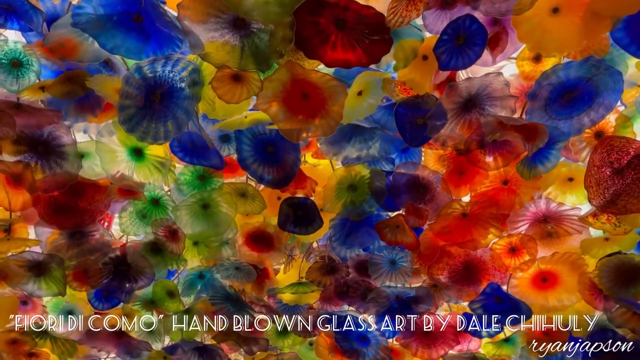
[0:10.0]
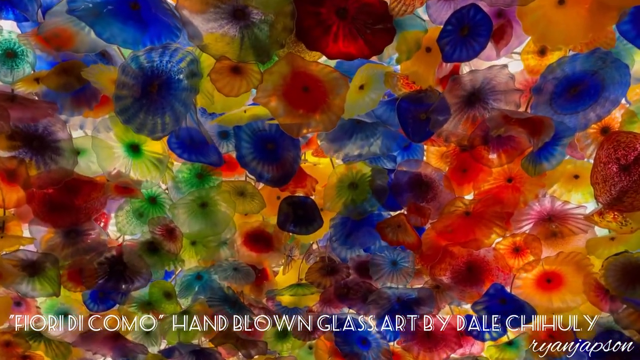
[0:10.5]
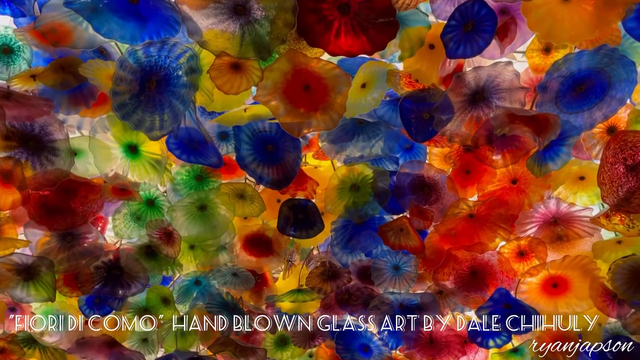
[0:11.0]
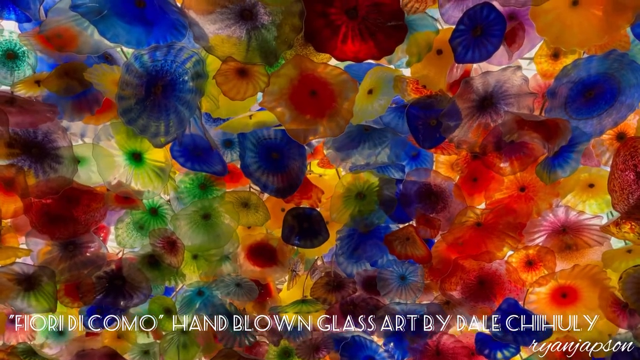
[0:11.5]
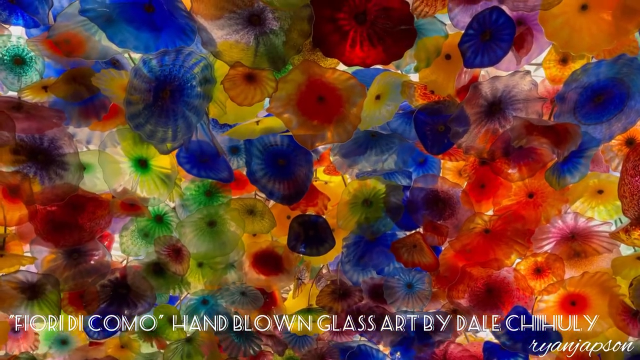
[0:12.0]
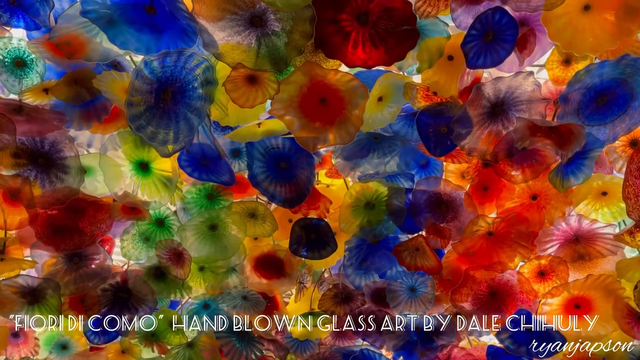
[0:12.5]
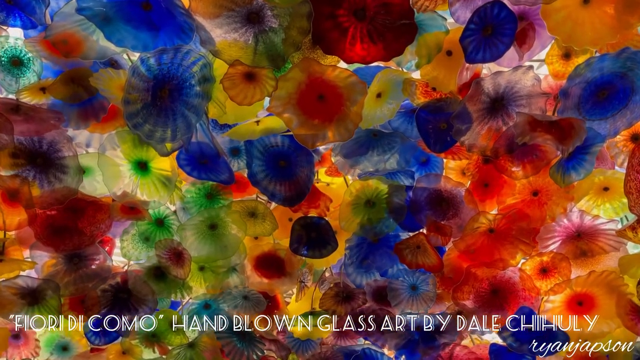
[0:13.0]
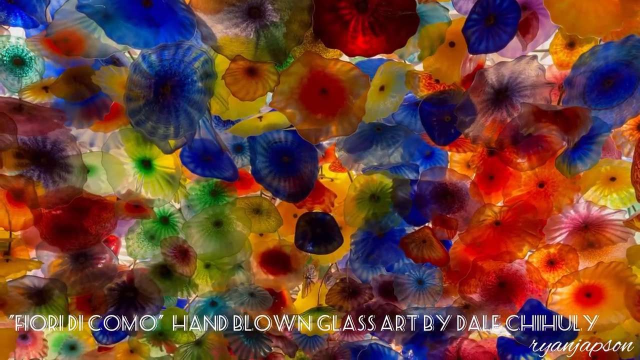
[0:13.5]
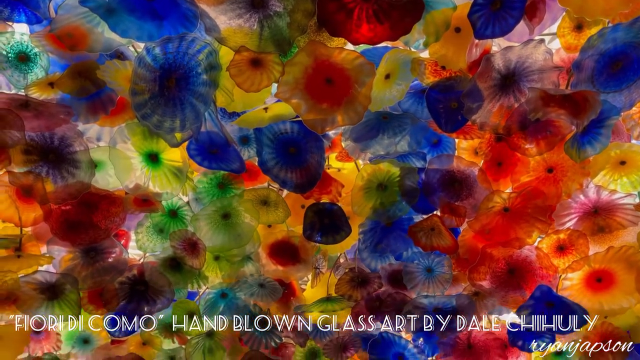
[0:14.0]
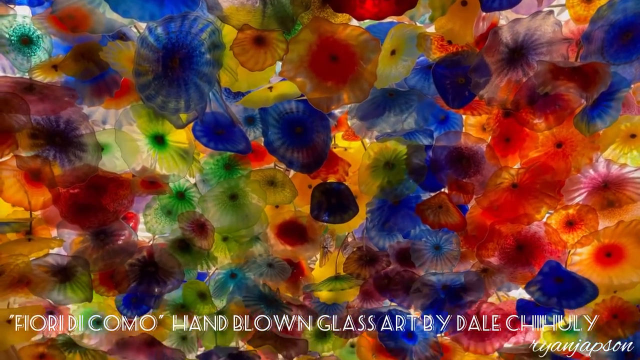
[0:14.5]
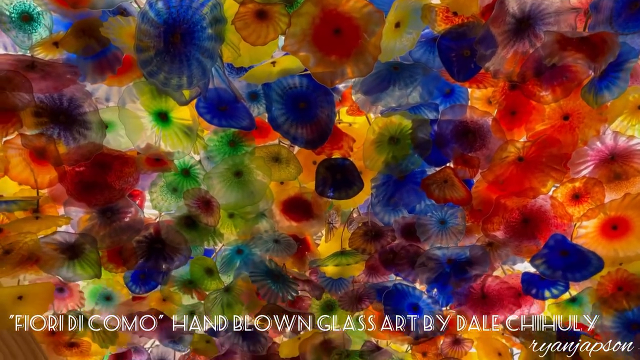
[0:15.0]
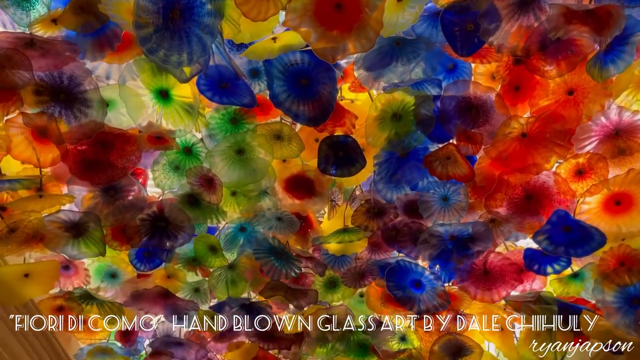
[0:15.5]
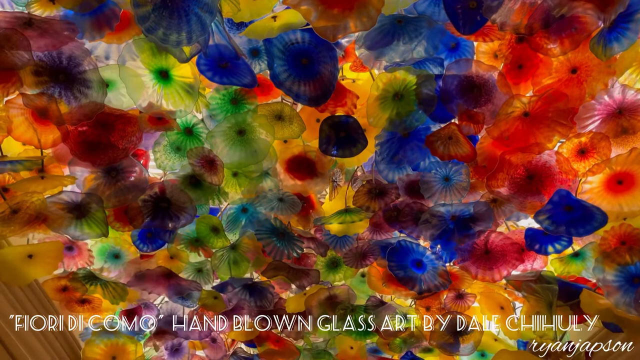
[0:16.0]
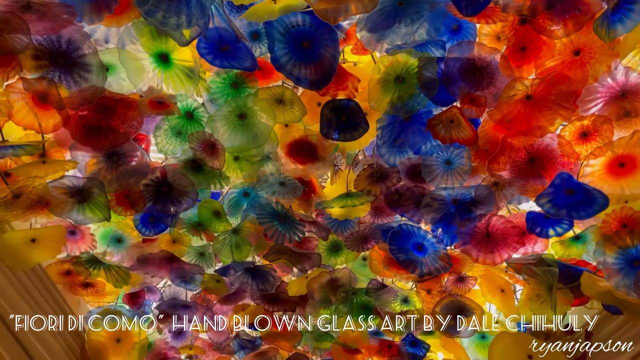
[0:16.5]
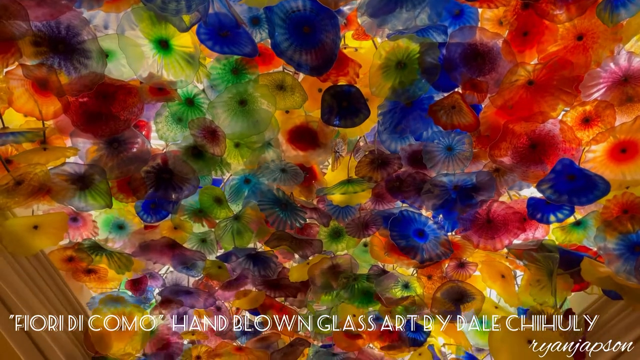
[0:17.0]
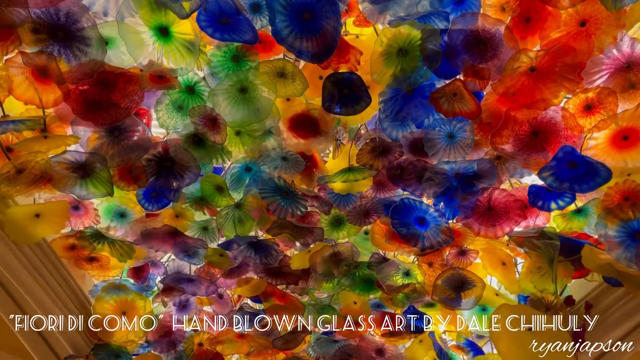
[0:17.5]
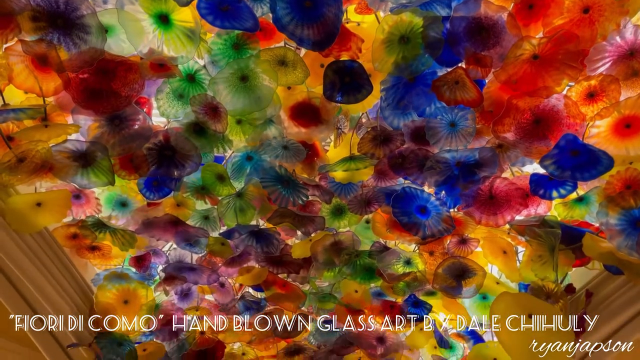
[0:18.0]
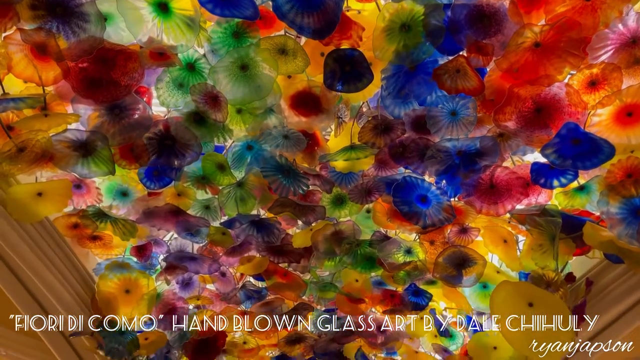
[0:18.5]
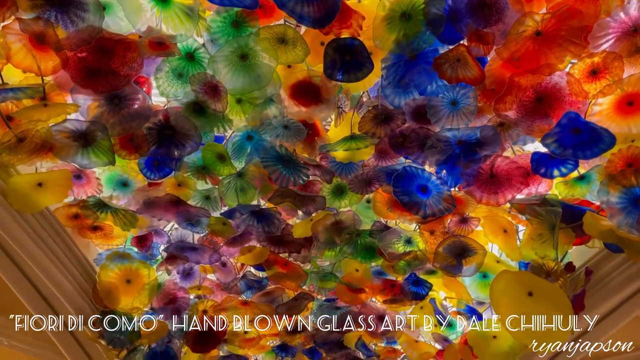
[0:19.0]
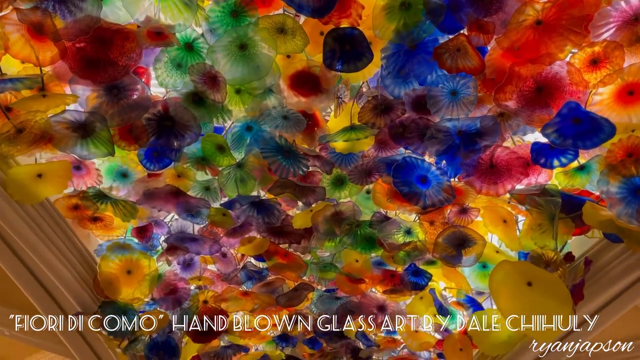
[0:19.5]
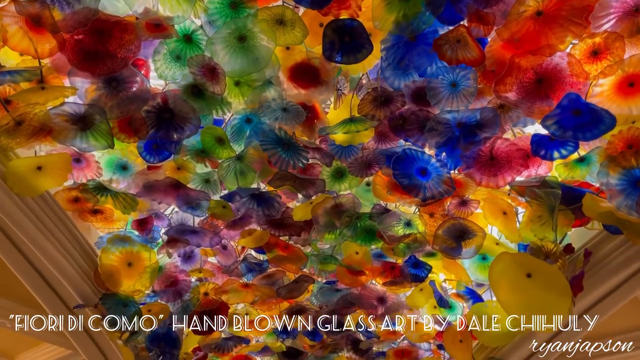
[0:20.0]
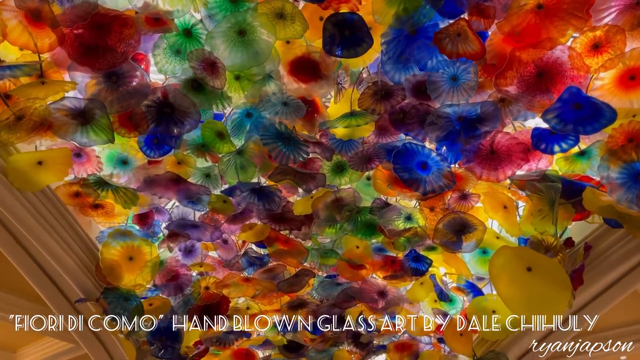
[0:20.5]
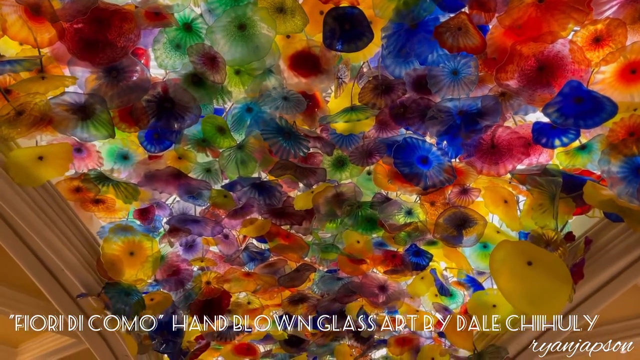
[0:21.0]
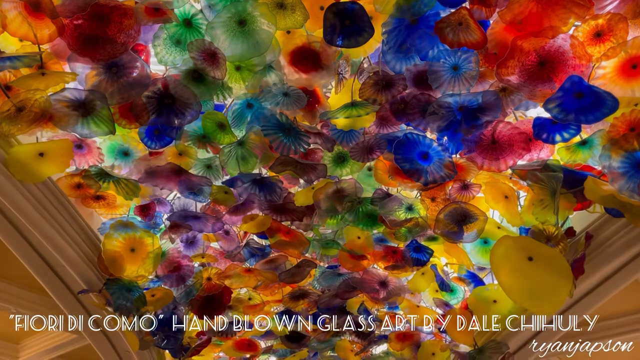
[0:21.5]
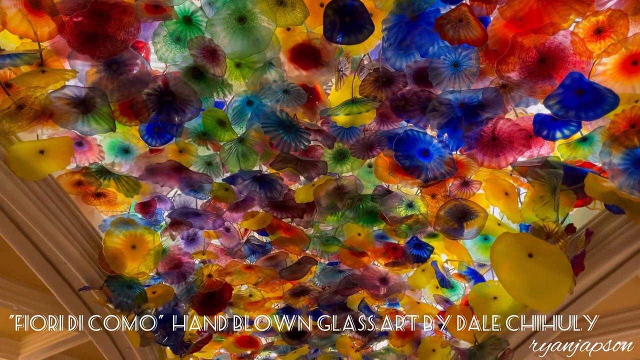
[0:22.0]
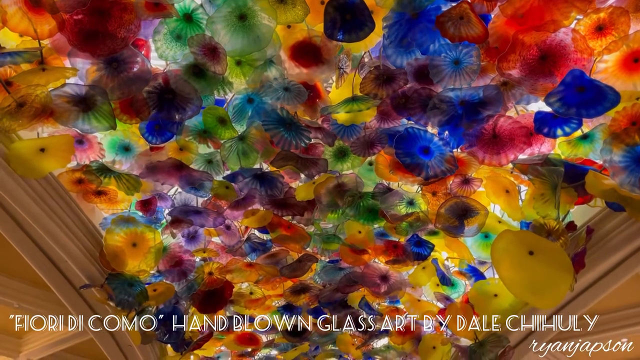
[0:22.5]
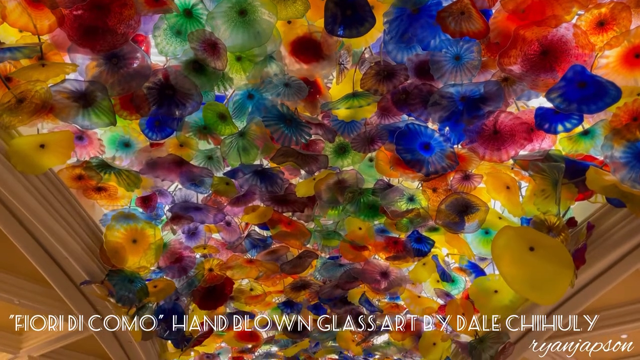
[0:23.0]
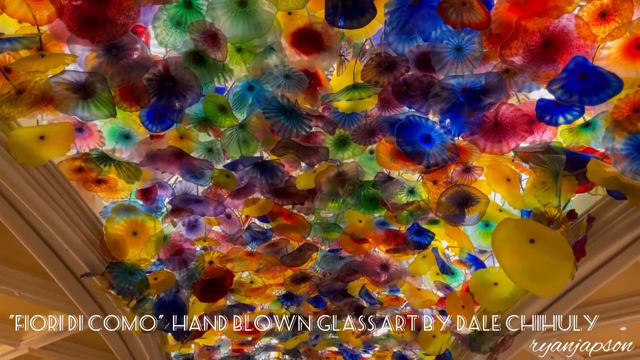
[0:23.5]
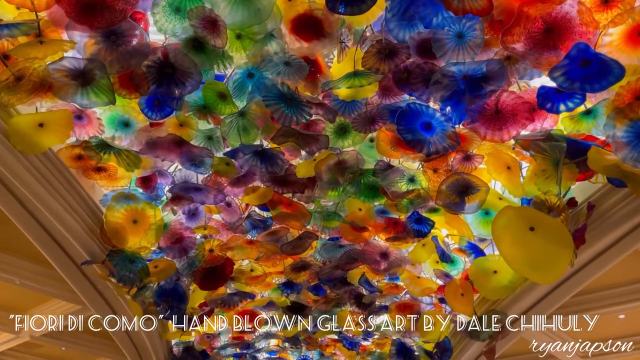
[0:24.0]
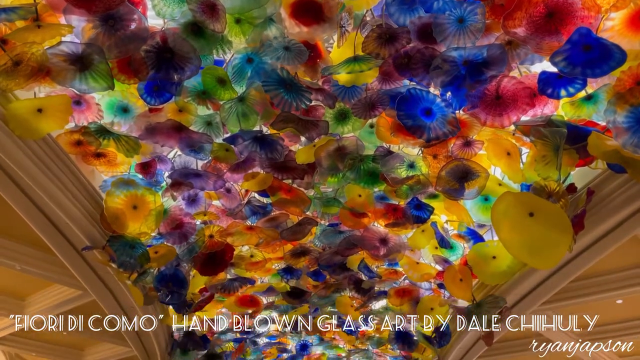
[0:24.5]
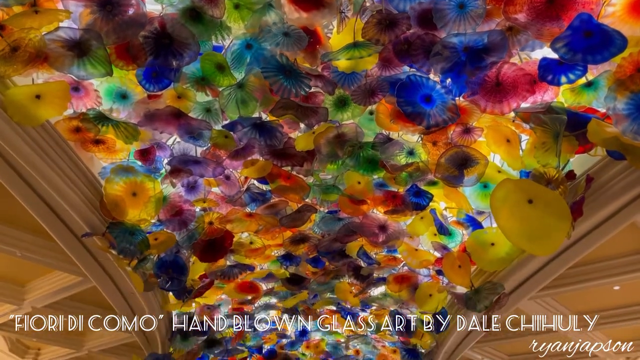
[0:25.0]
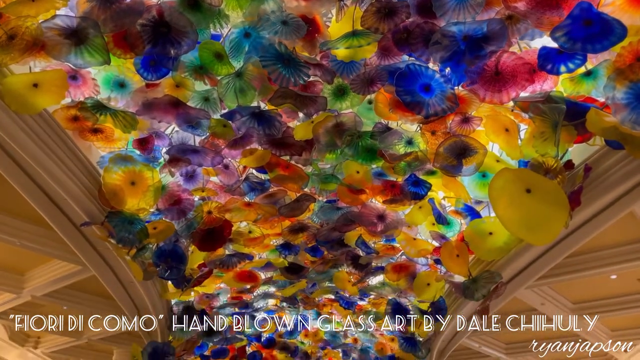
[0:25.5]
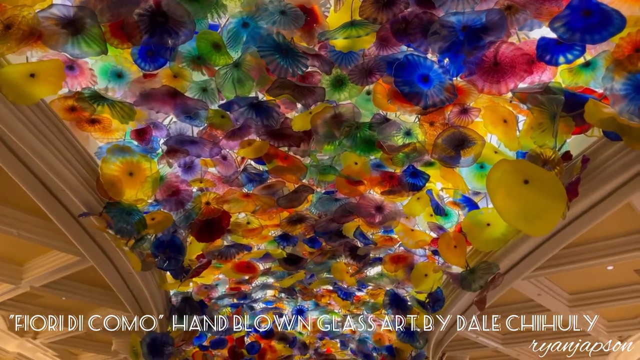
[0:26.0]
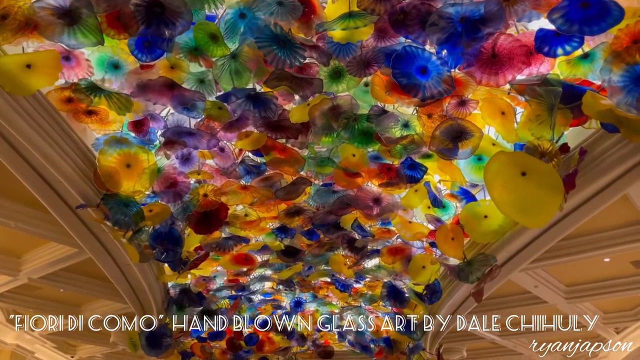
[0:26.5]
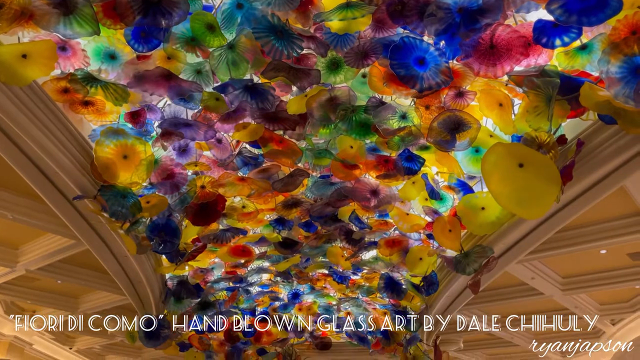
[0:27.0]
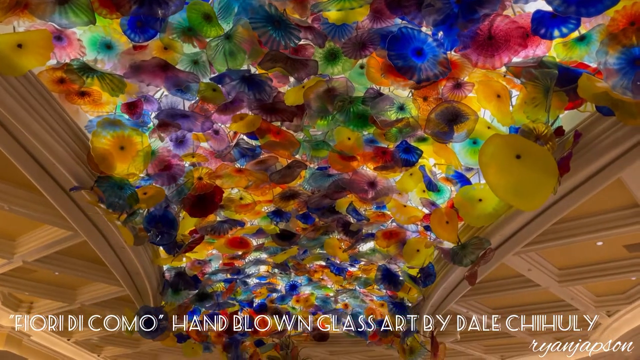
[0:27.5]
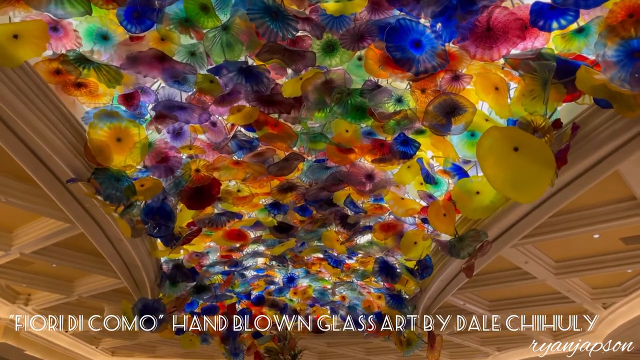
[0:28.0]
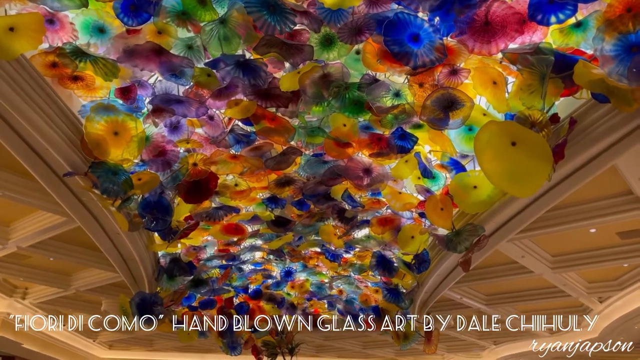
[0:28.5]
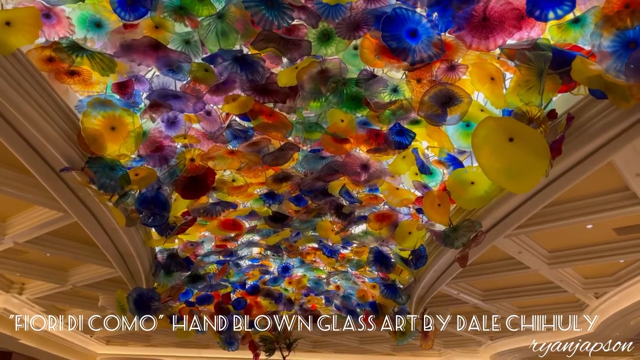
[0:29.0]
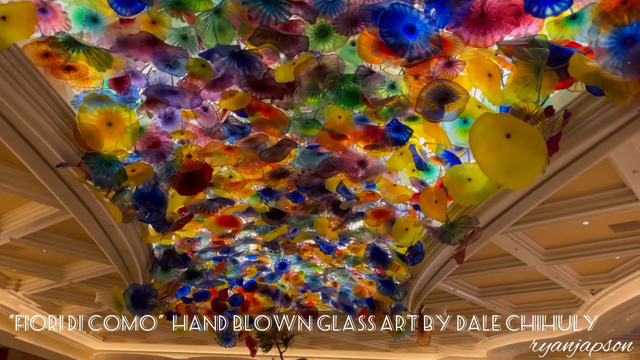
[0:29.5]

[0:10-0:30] The frame is filled with the translucent pieces. Some are clear with a blue center and blue lines coming out from it. Small areas of pink curve on each side, starting from the middle and fading down toward the middle of the bottom of the picture. The surface is a solid tannish brown and looks very smooth. It appears to have molding where the multicolored objects are, and the objects look as if they are pushed up into something; some of them extend below the molding or whatever holds them in place. Some pieces are a lighter green, some are darker green with stripes, some are solid yellow, and some are yellow with stripes a darker shade than the yellow center. As the view fades down and more of the bottom of the picture is visible, there appears to be molding or divisions decorating the solid surface. The view appears to be looking up overhead at this surface.